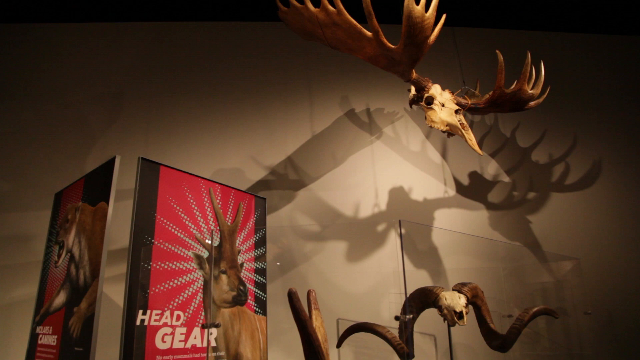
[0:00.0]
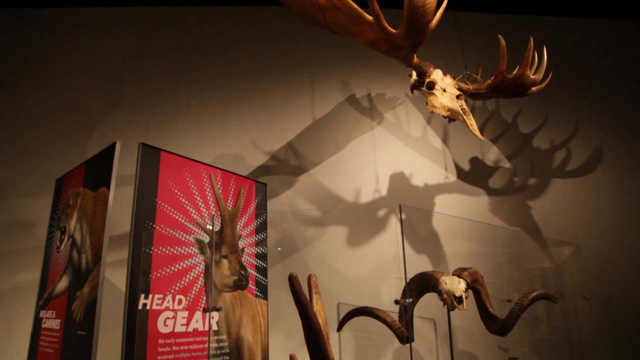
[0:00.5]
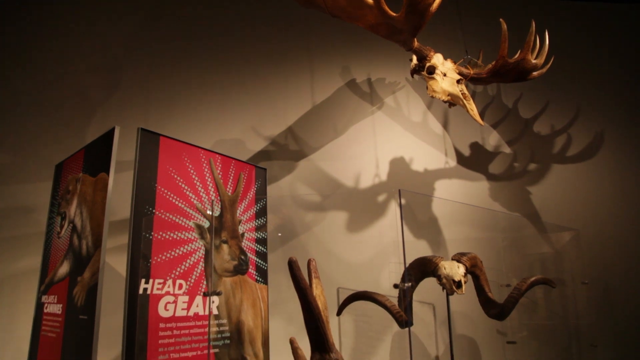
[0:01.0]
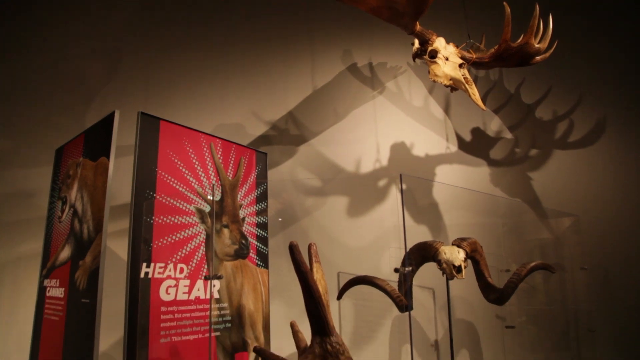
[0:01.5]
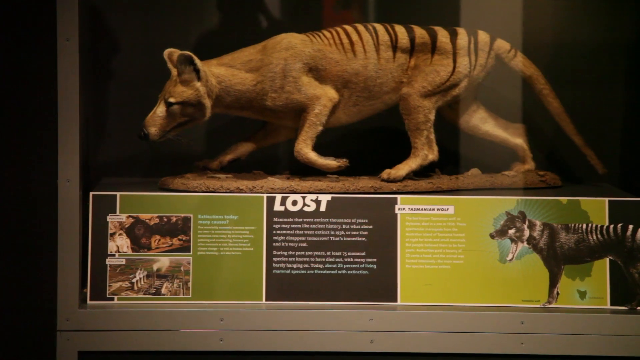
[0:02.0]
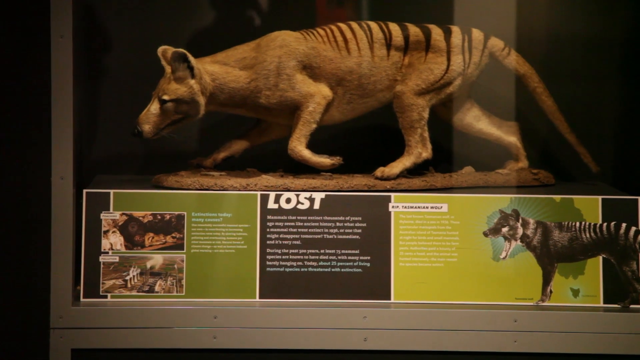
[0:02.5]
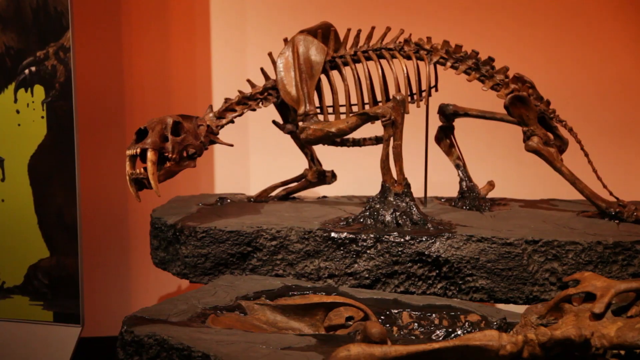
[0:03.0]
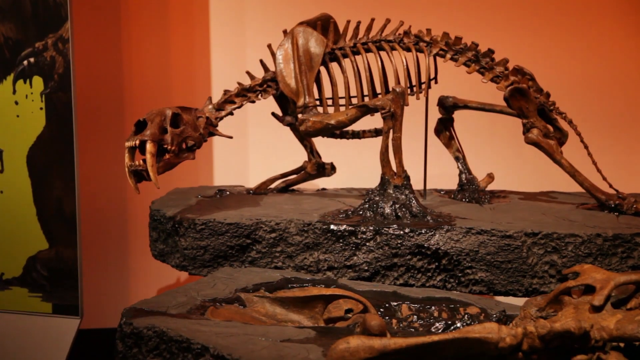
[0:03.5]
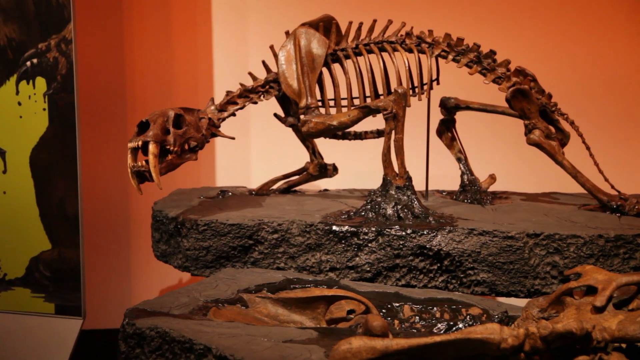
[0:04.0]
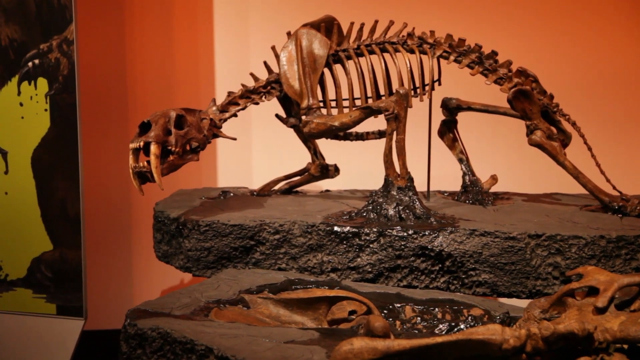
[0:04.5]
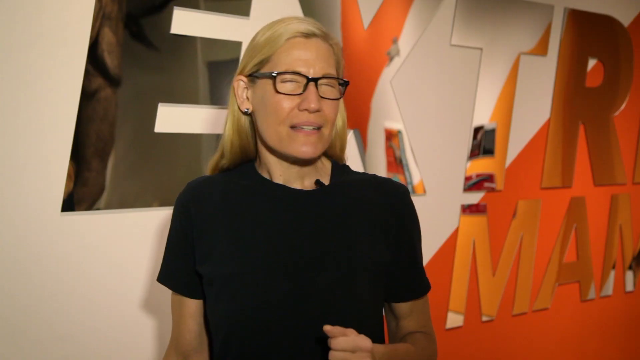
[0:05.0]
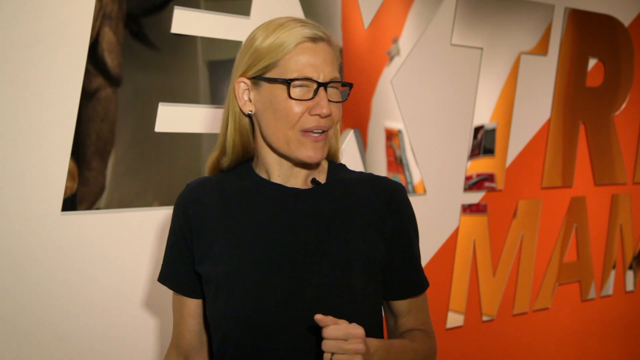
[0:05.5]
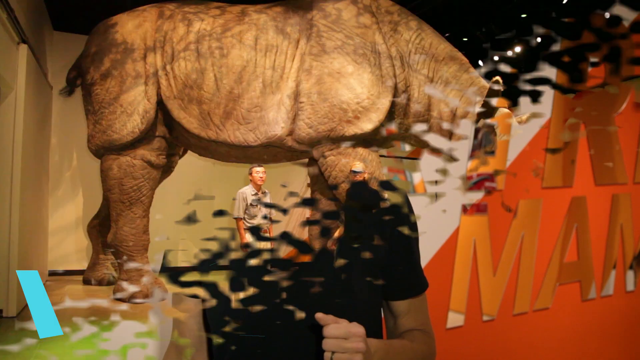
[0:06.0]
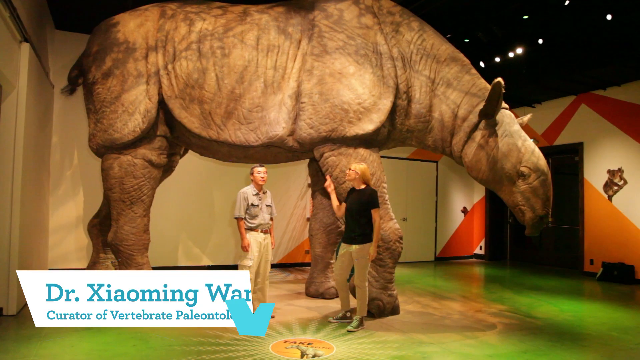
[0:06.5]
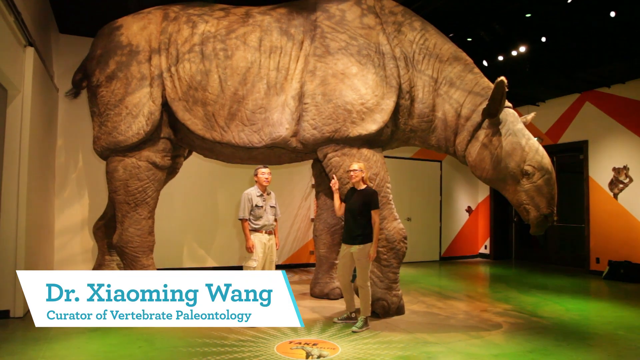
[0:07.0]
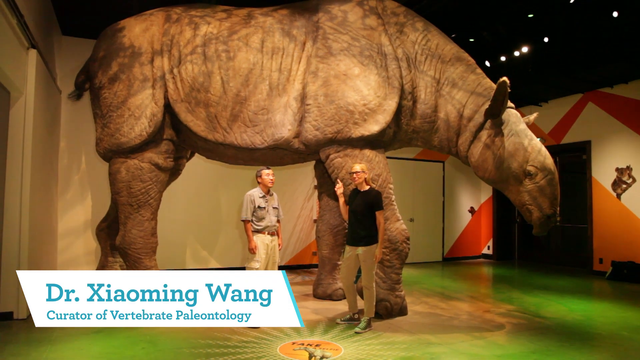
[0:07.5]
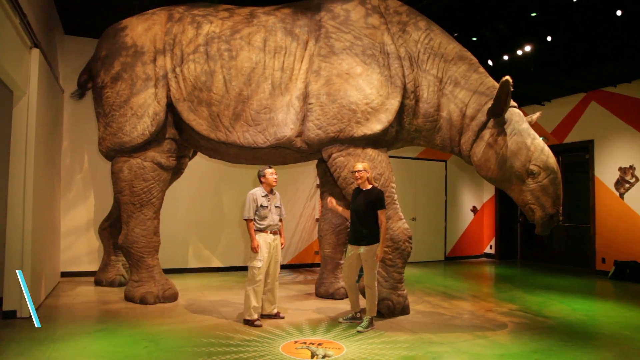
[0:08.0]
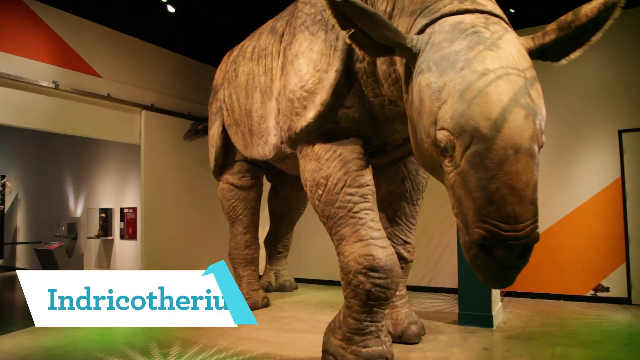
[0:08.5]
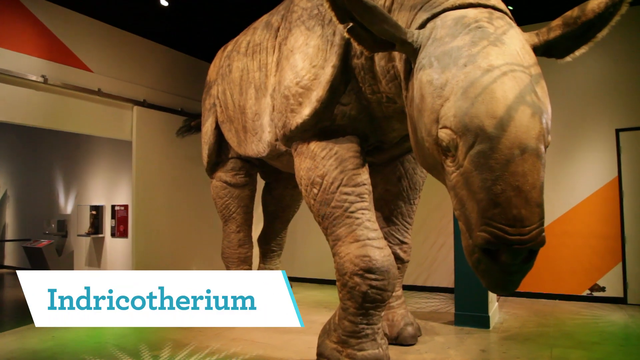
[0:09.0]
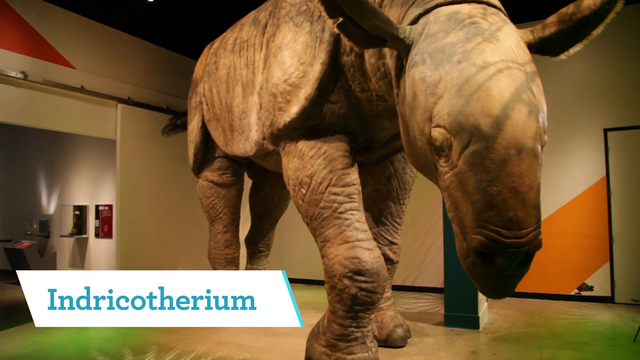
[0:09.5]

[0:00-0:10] What look like animal skulls are on display, including a moose skull with its horns and what seems to be a ram skull. There is a sign in what may be some kind of museum that apparently says "gear, headgear." The view then moves to another animal with stripes along its back down to where its tail begins. The word "lost" is on the display in front of this animal, which does not appear to be real and looks like some kind of display. The video then switches to a skeleton of a creature with fangs or long canine teeth, standing on some kind of stone base.